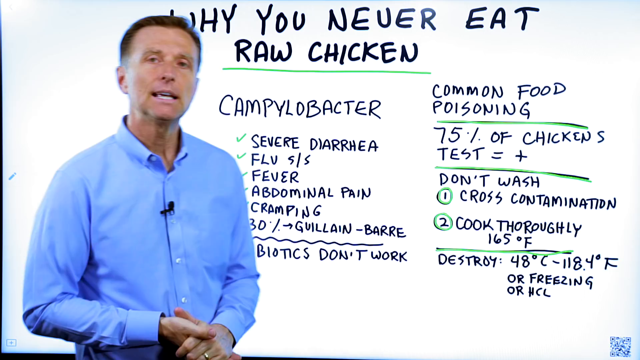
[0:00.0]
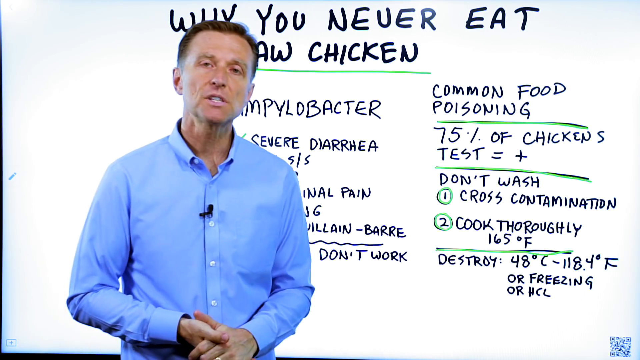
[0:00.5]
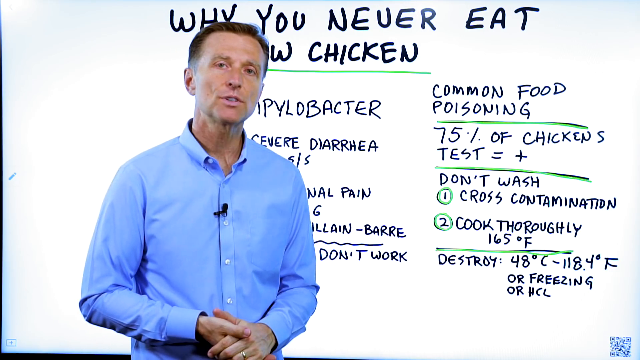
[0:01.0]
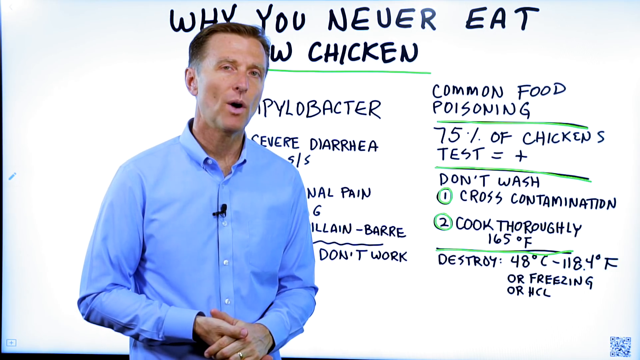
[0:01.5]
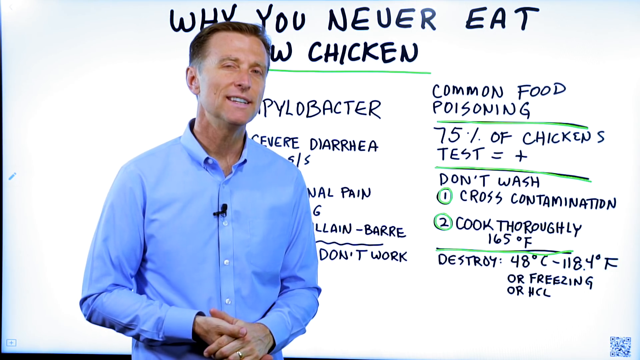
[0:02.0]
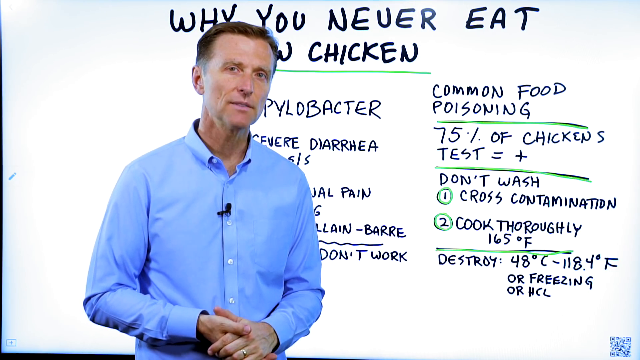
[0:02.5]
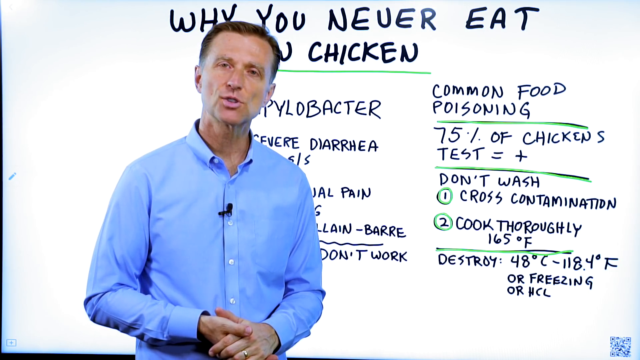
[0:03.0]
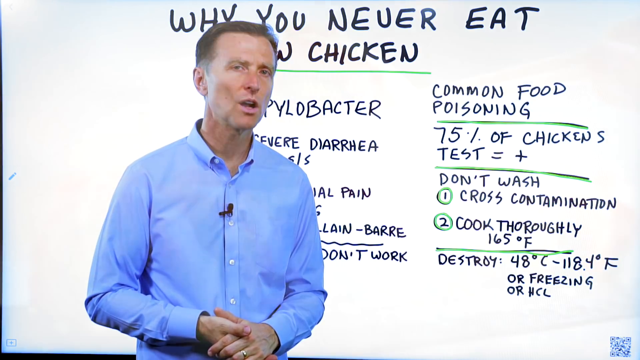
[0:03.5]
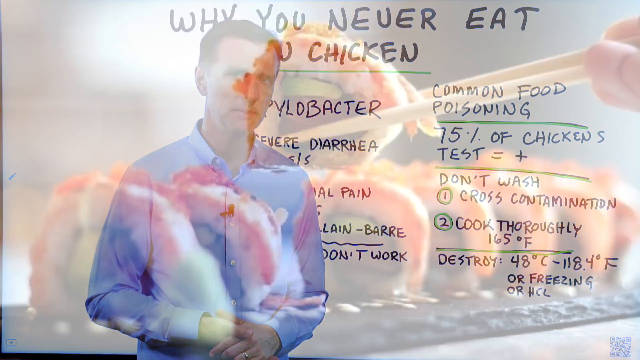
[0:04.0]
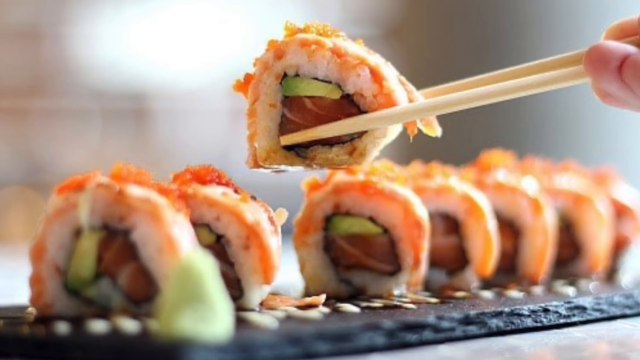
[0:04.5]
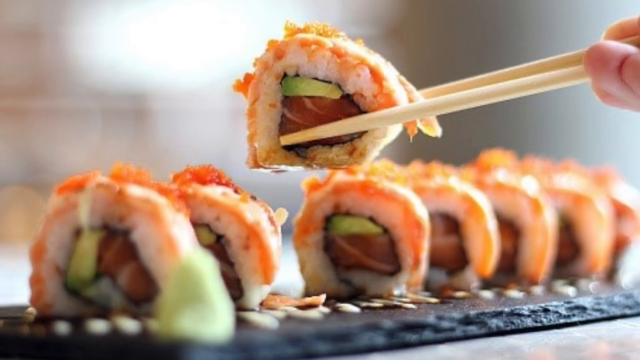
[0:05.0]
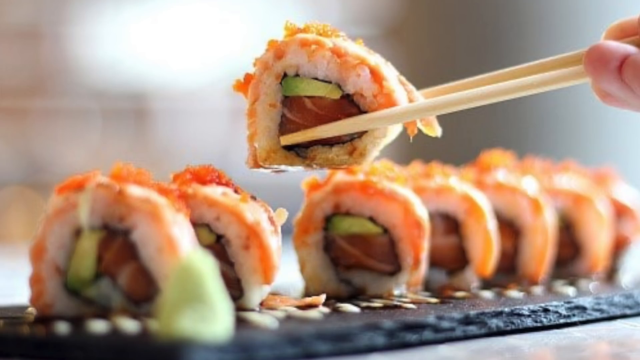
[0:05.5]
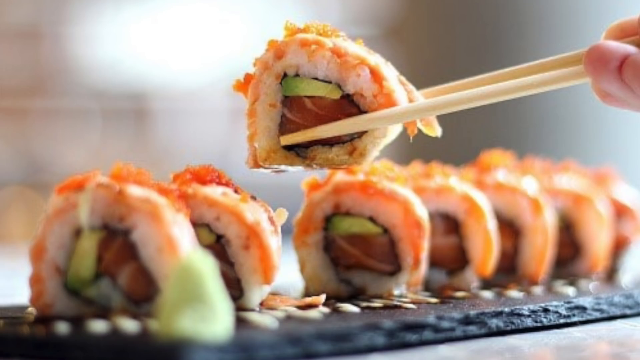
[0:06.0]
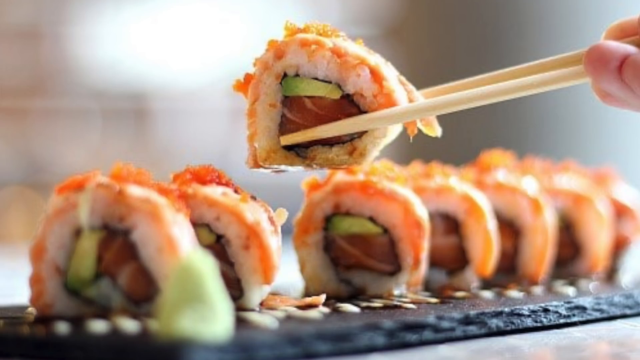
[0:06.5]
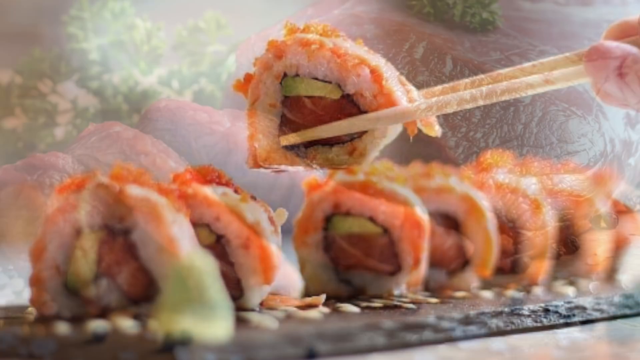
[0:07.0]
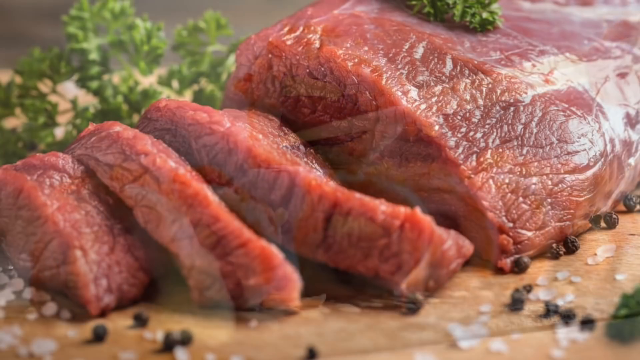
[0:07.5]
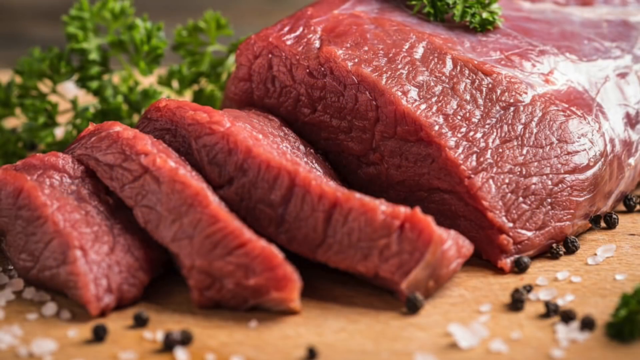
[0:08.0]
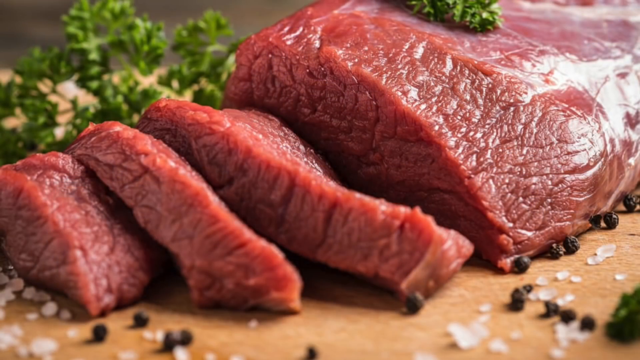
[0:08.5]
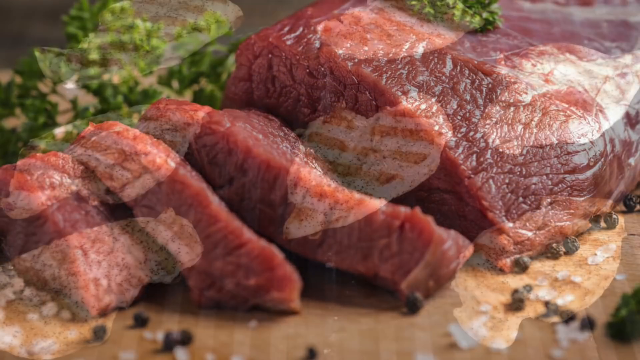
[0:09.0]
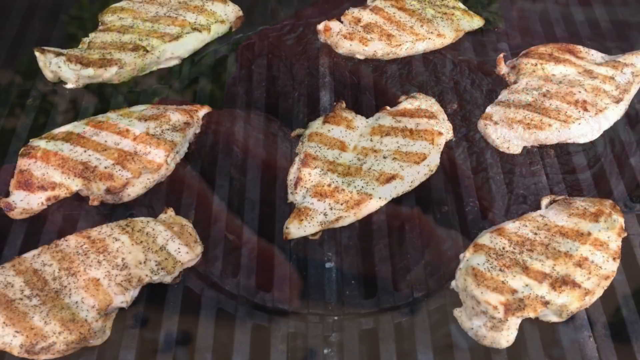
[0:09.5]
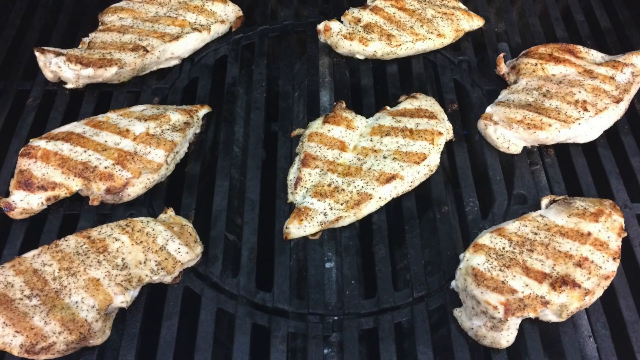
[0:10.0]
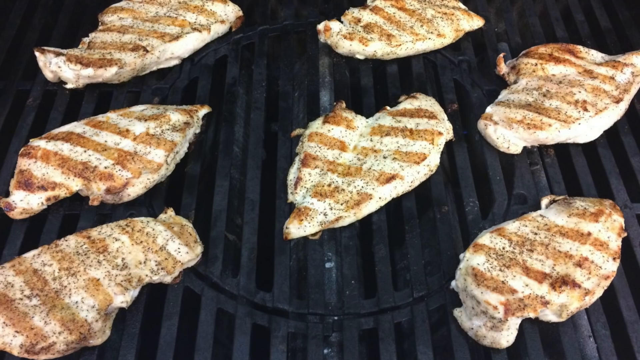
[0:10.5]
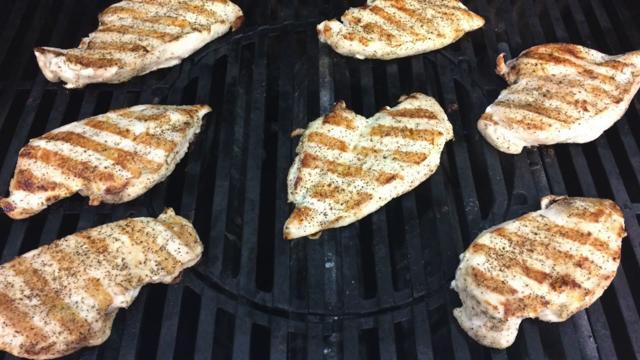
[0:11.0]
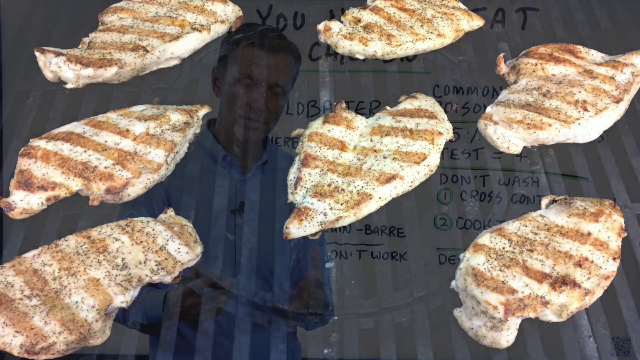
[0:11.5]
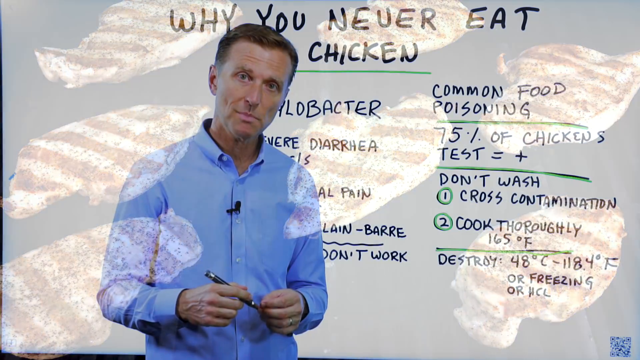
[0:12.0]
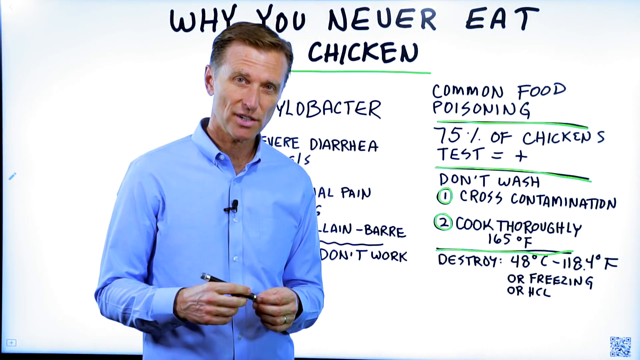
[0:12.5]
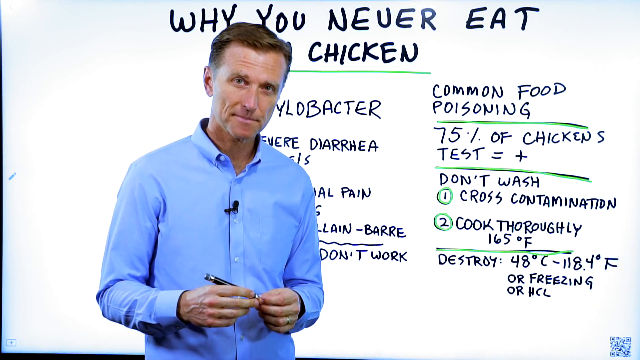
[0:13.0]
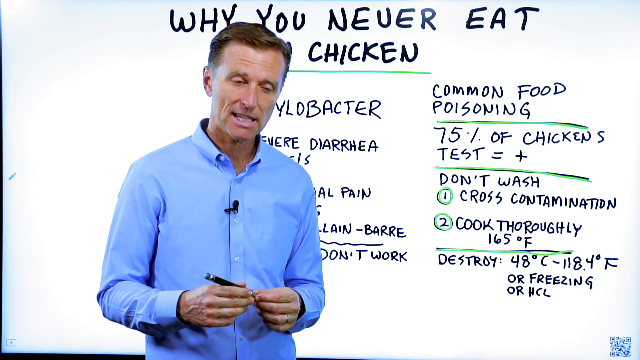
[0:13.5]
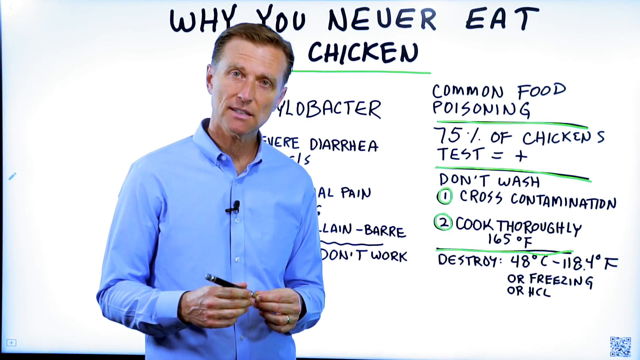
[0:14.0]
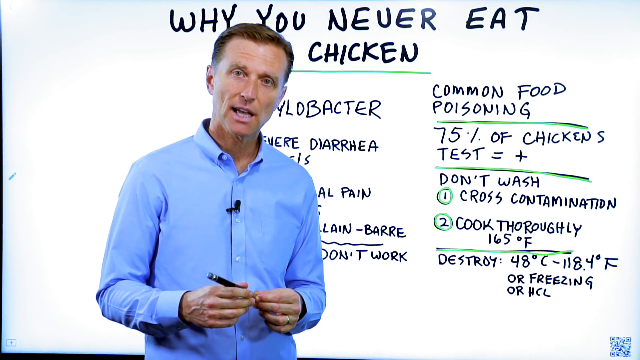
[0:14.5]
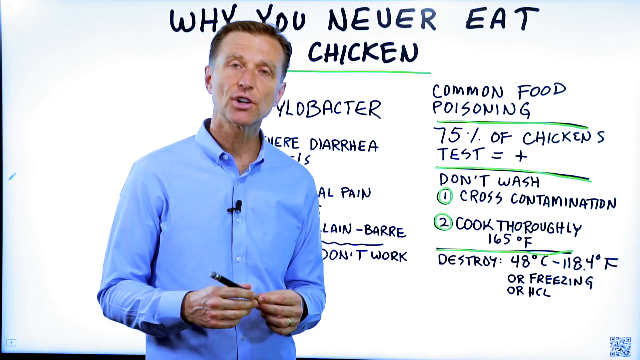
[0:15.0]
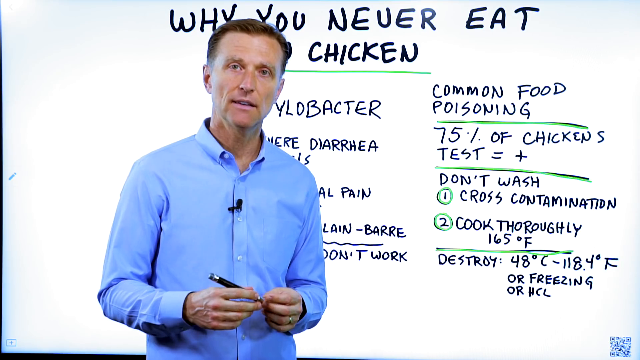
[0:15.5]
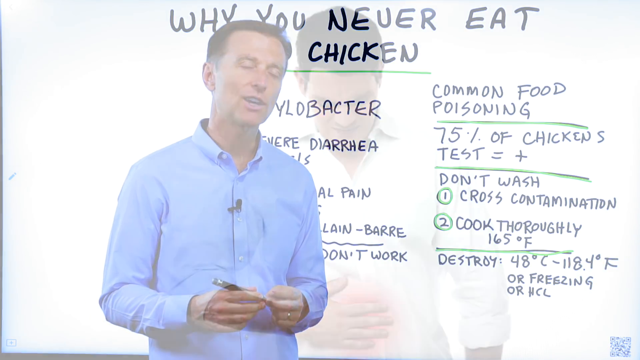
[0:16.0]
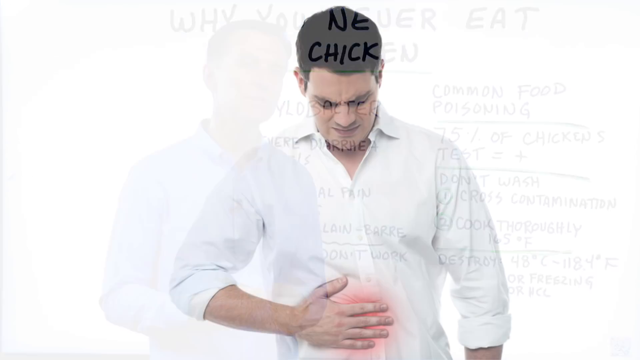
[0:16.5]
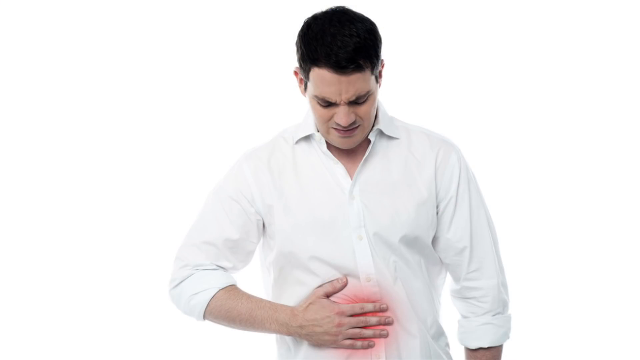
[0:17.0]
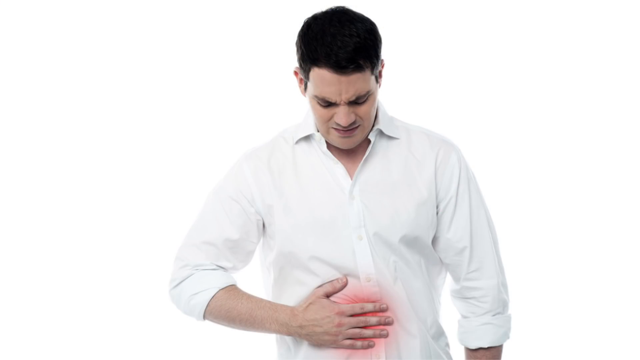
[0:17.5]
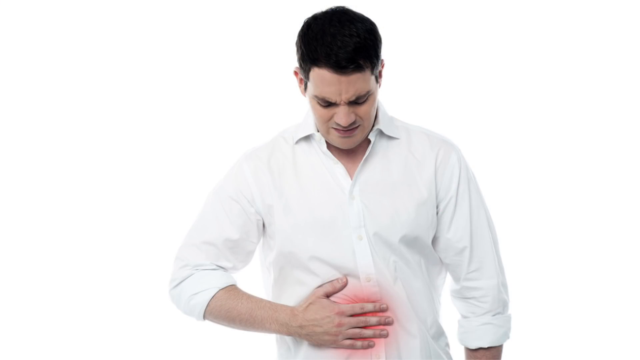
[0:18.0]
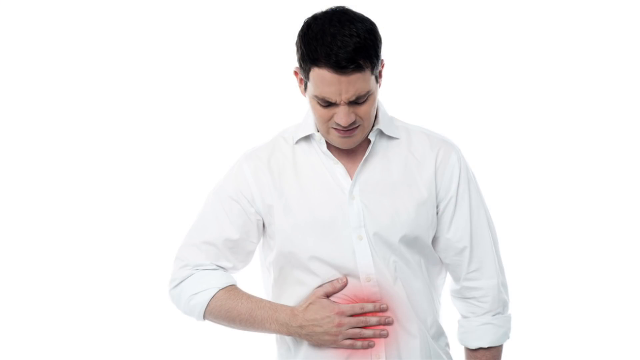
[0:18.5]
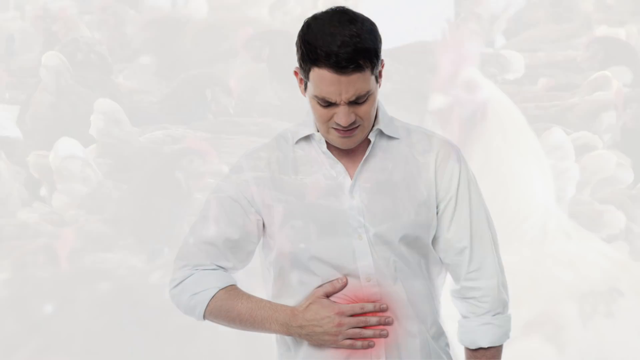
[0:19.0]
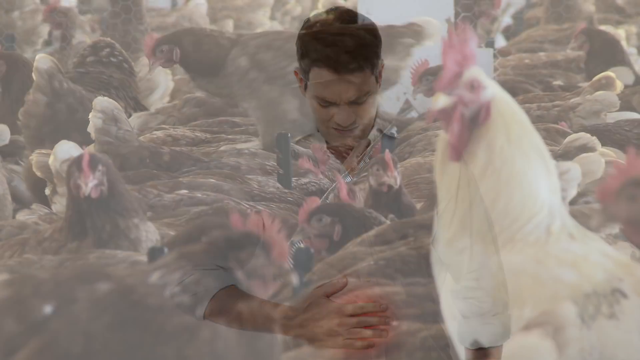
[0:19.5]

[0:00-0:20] A man in a blue T-shirt, who looks about 30-something years old, is next to a whiteboard. On the whiteboard he has written "Why you never eat raw chicken?" along with a numbered list that includes "severe diarrhea", "fever" and "cramping", as well as notes including "common food poisoning", "75% of chicken", "destroyed 48 degrees" and "negative 118 degrees". The video then shows food on a table, which is sushi, and red meat. Next, red meat is shown being cooked on a stand. The man giving the lesson on why you never eat raw chicken appears on screen, and then a man wearing a white T-shirt is shown.